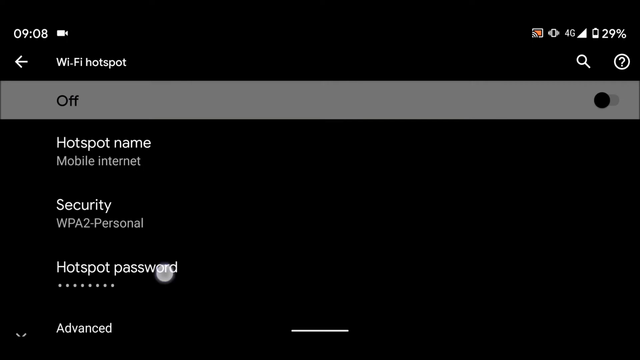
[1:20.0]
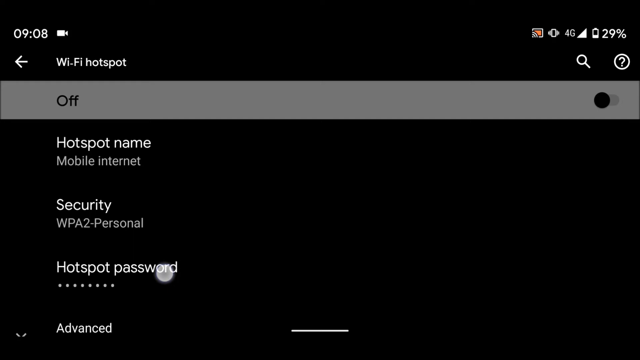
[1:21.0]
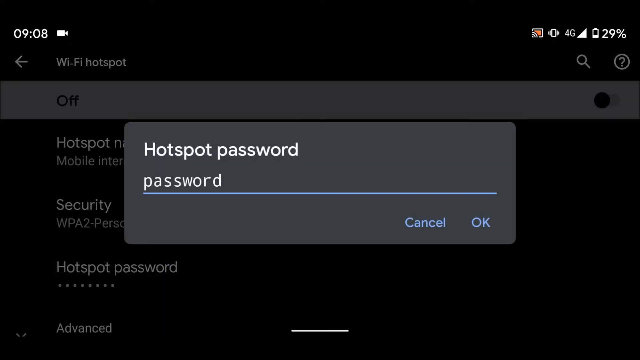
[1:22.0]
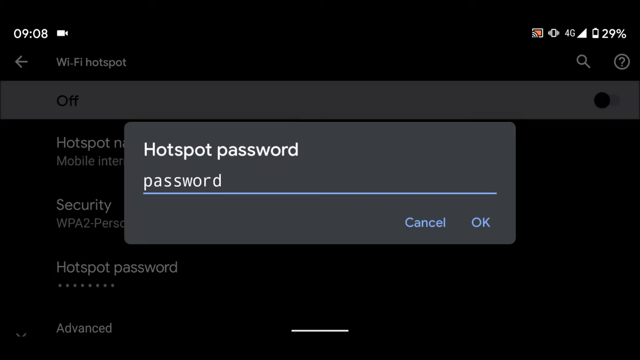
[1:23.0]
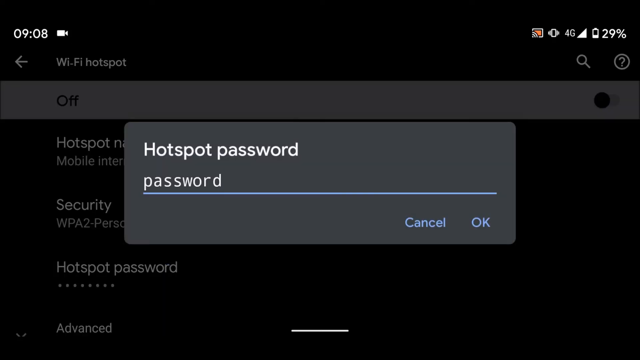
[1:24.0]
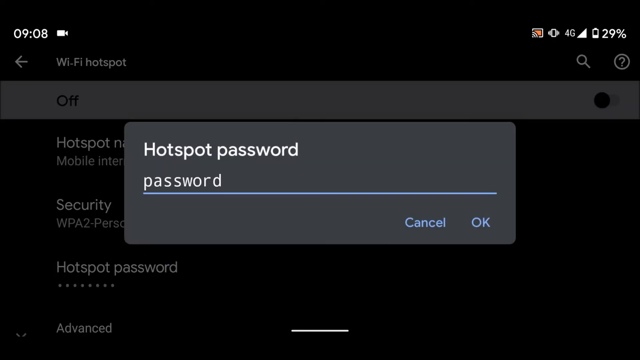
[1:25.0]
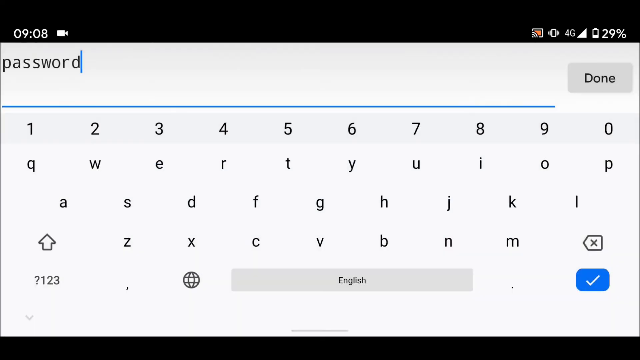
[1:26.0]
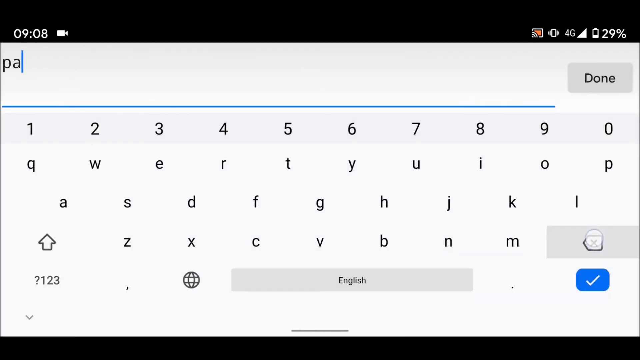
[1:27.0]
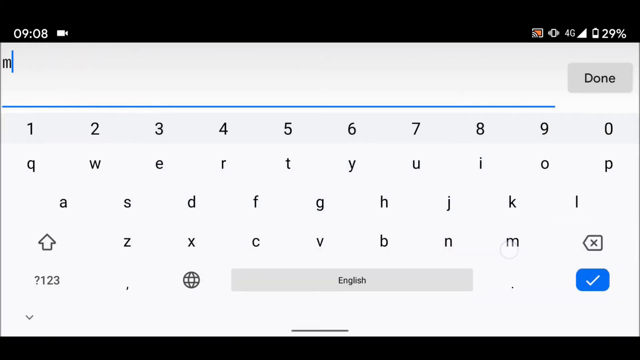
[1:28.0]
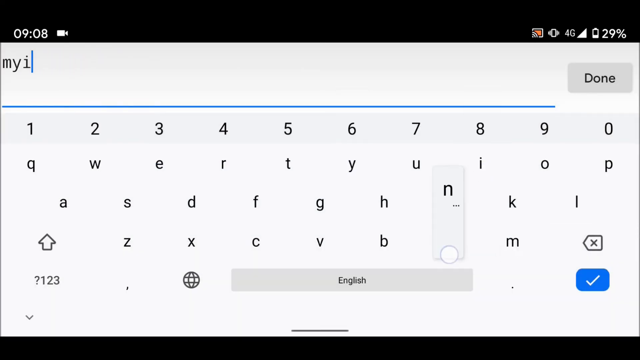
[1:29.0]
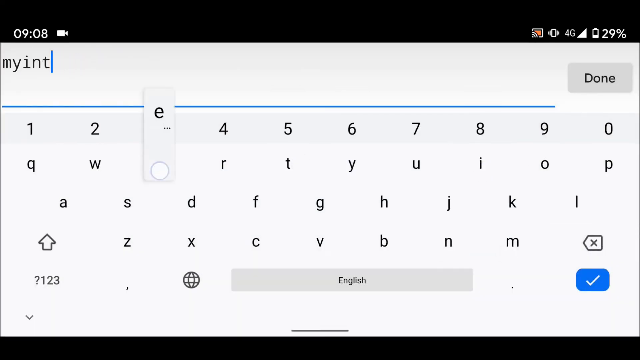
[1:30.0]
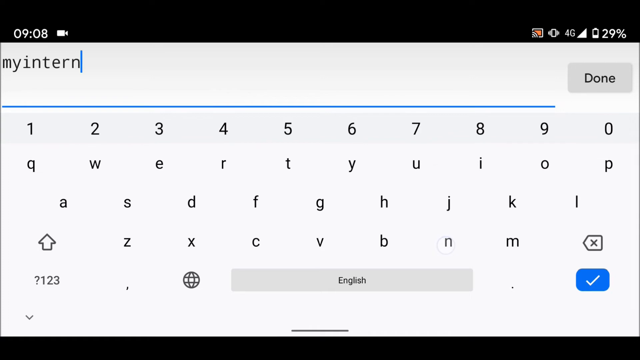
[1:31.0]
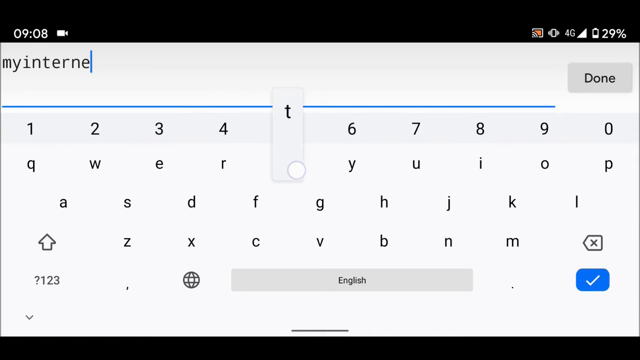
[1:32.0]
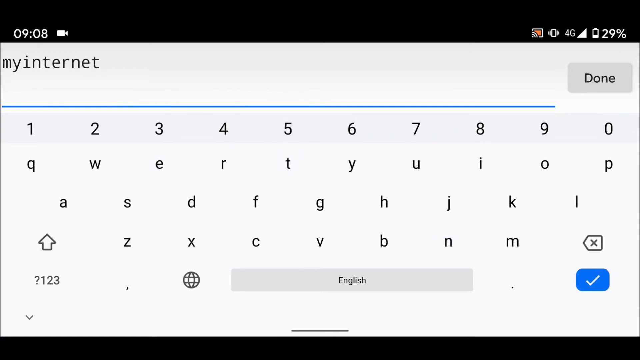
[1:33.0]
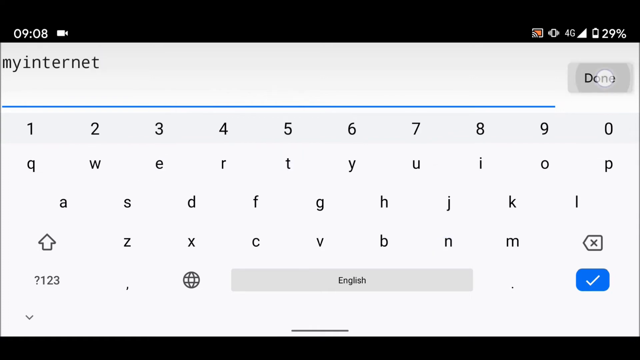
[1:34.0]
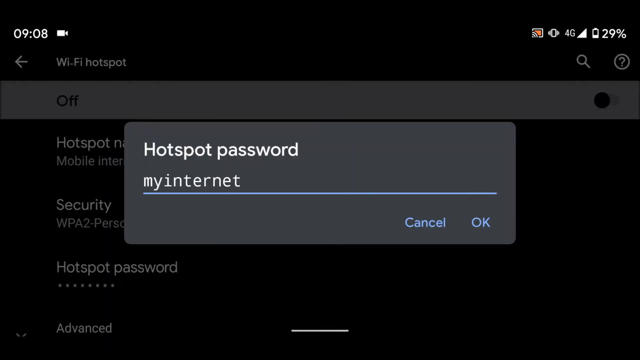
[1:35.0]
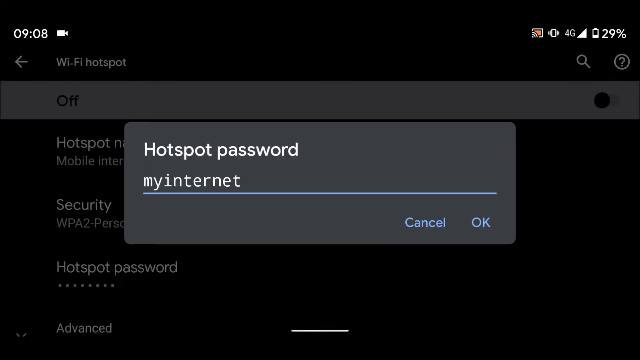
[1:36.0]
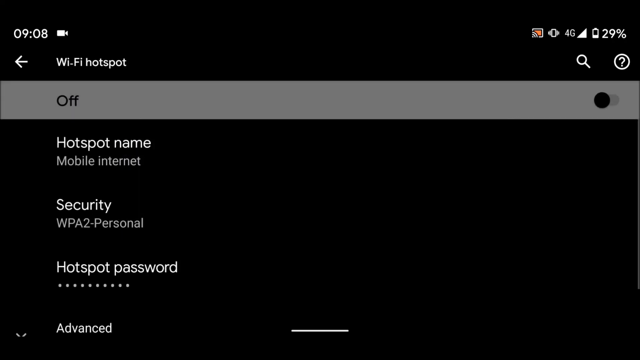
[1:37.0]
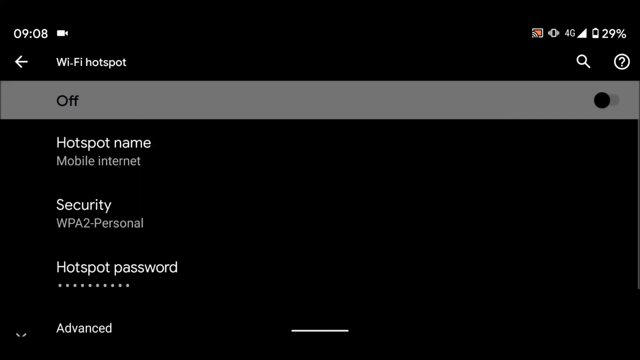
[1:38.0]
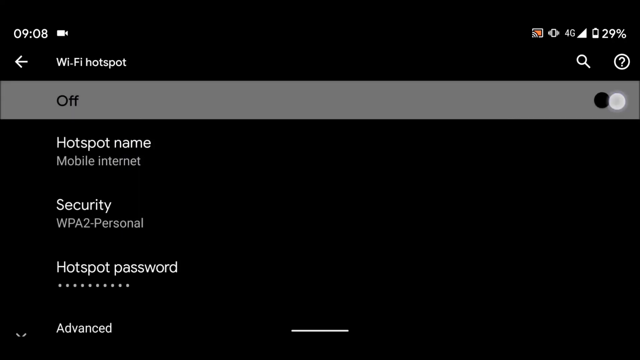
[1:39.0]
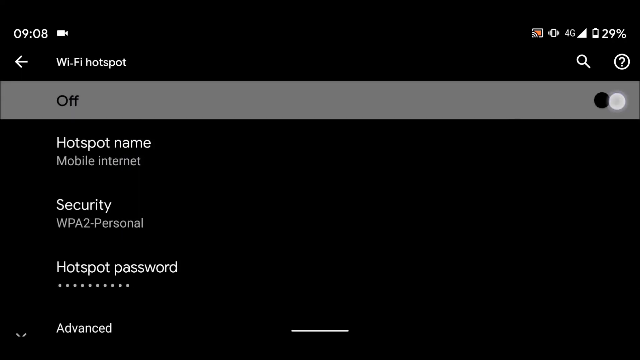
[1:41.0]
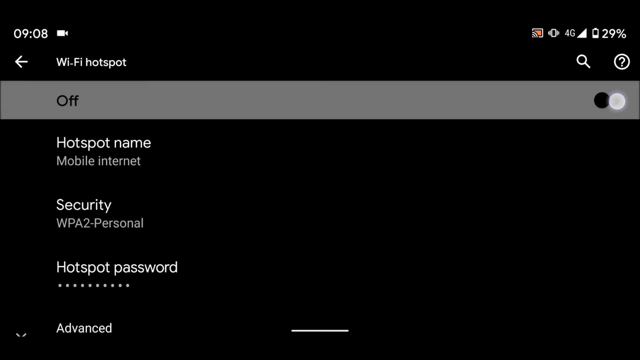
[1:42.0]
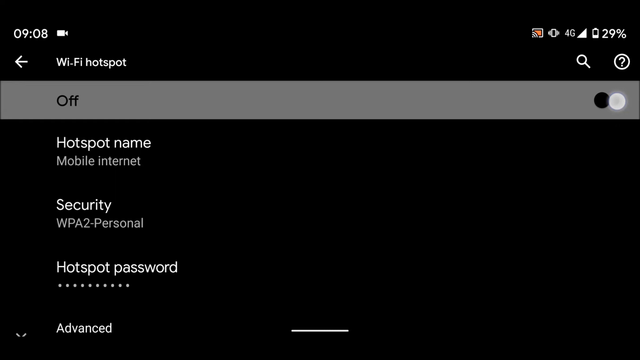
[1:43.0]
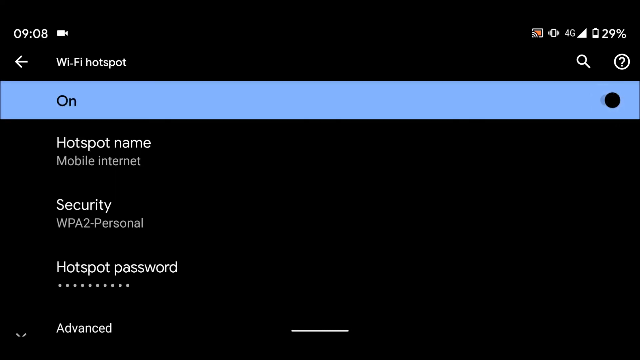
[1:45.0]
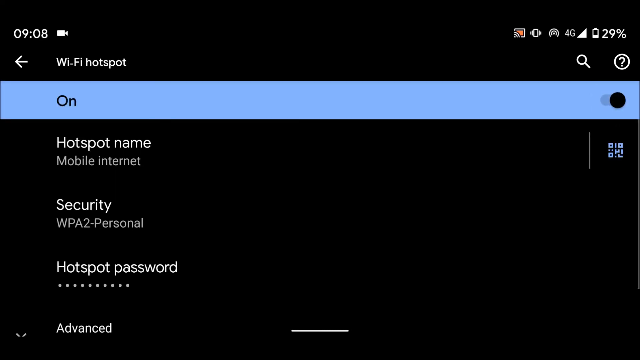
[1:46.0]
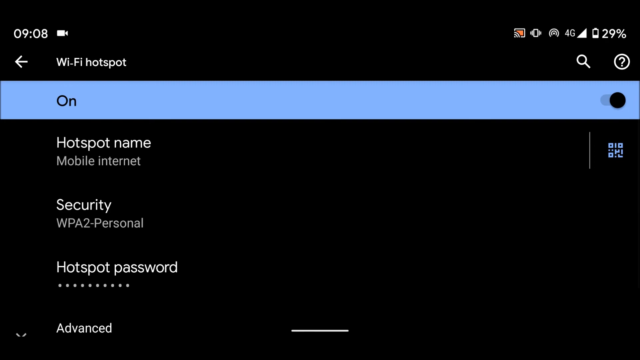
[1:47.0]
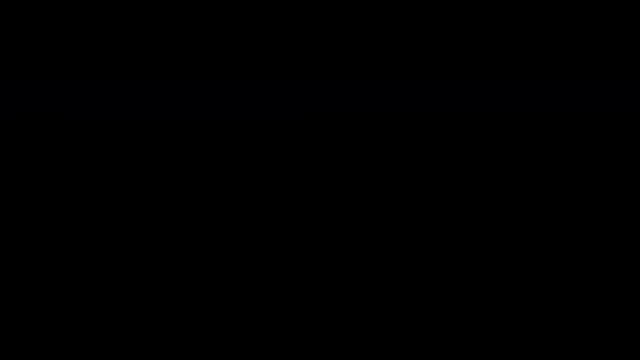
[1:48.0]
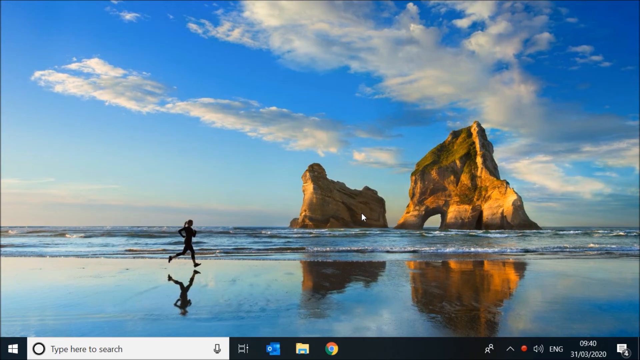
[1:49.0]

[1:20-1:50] A menu, apparently on a cell phone, reads "Wi-Fi hotspot" with more options below. A box appears in the forefront titled "hotspot password"; underneath it reads "password", with a blinking blue cursor and a blue horizontal line below. At the bottom of the box, "cancel" appears in blue on the left and "okay" to its right. The person seems to click on the password field, a keyboard appears, and they erase the password and type a new one with no spacing. The keyboard disappears, and "myinternet" now appears under "hotspot password". They click OK, and the screen returns to the "Wi-Fi hotspot" screen.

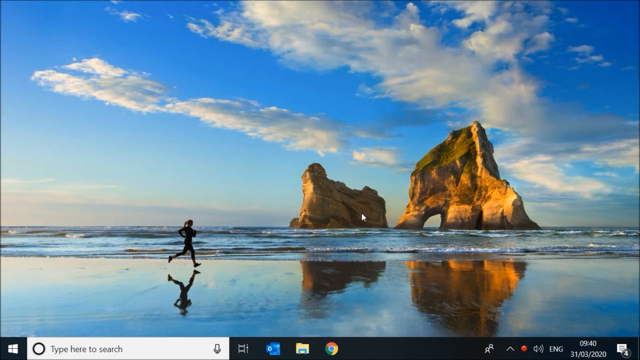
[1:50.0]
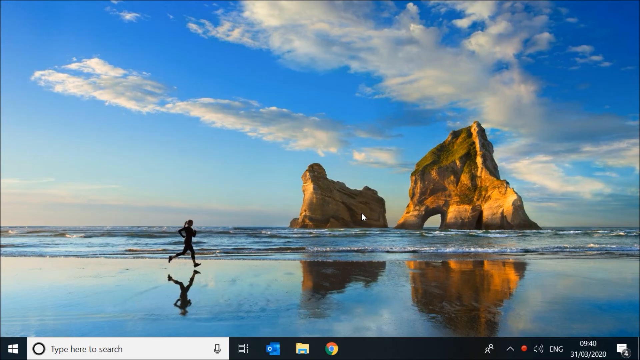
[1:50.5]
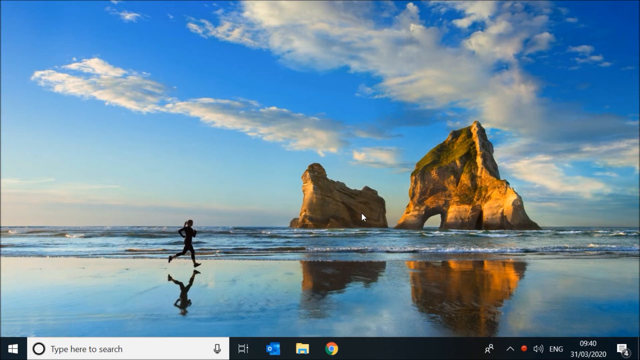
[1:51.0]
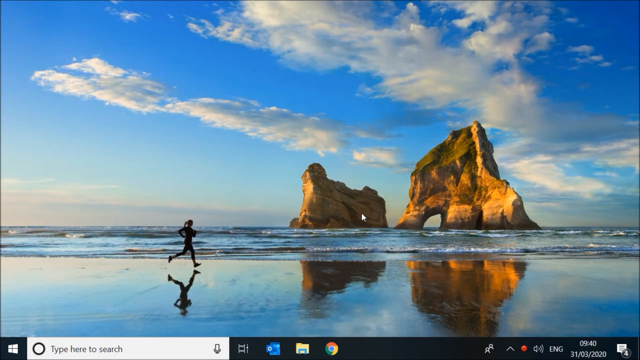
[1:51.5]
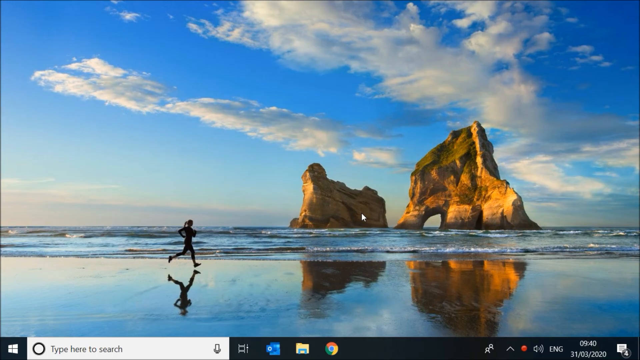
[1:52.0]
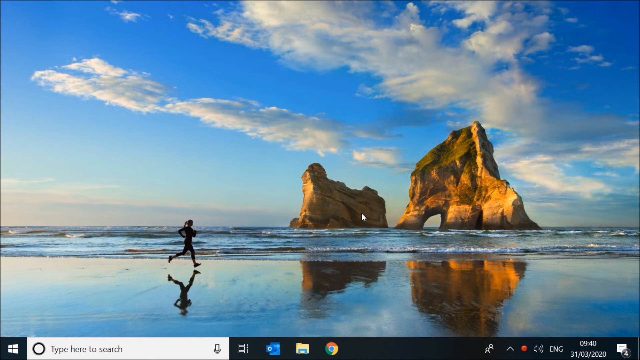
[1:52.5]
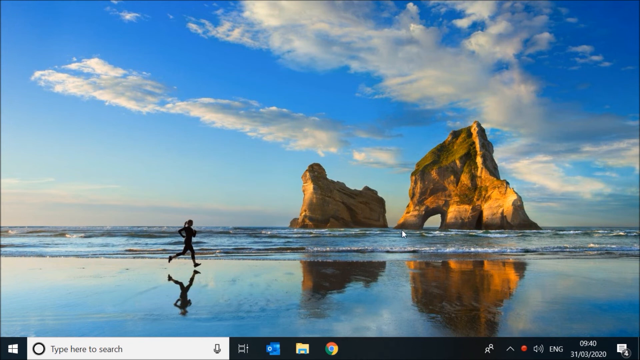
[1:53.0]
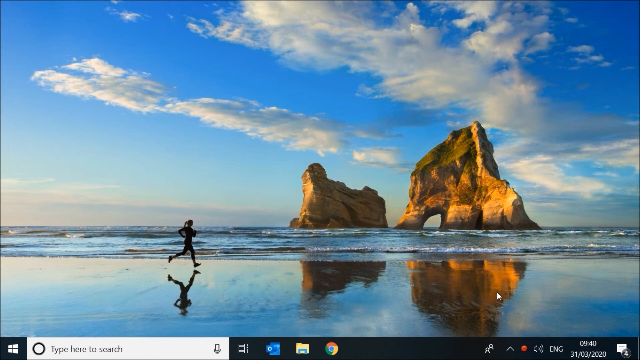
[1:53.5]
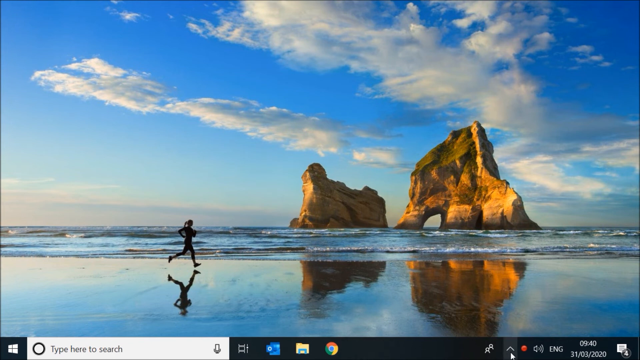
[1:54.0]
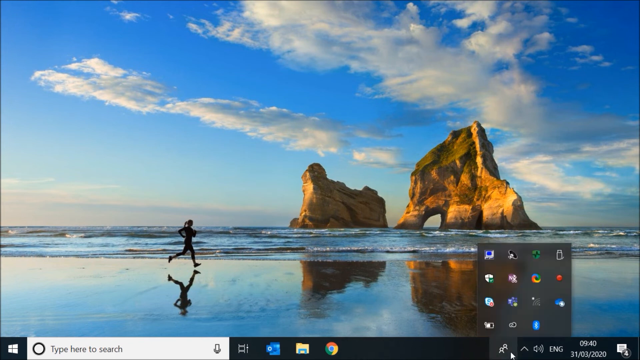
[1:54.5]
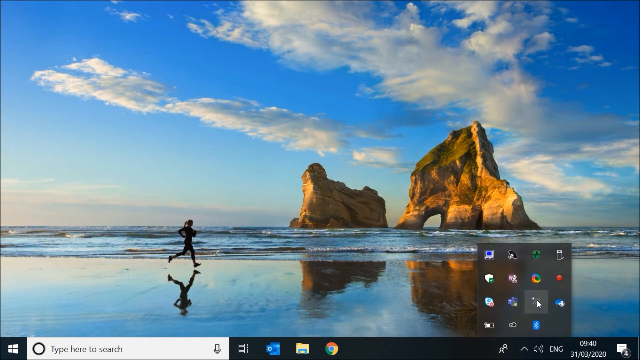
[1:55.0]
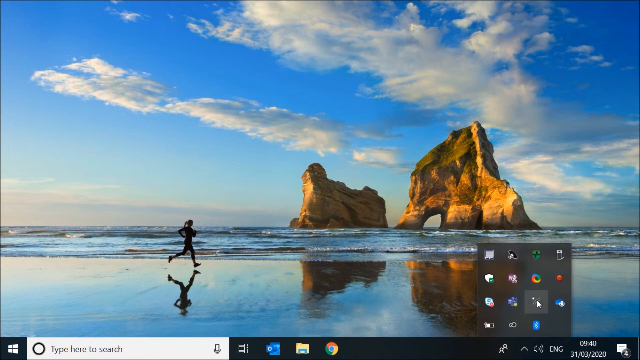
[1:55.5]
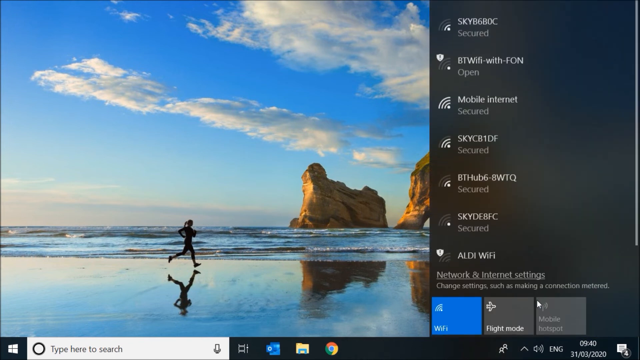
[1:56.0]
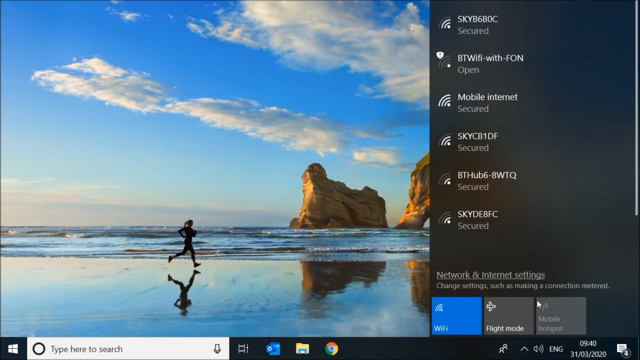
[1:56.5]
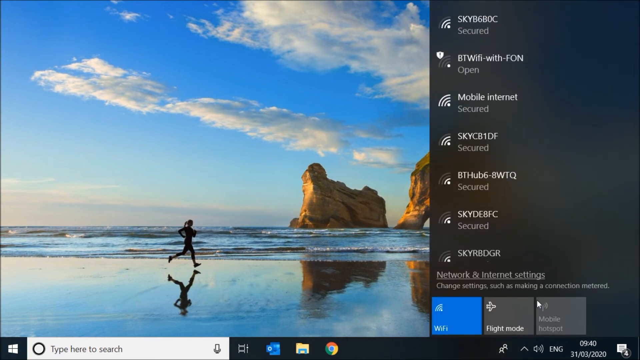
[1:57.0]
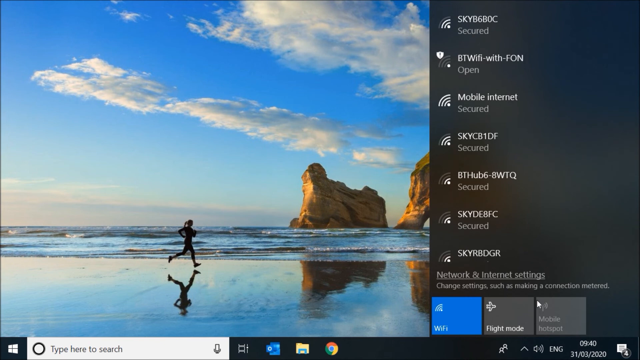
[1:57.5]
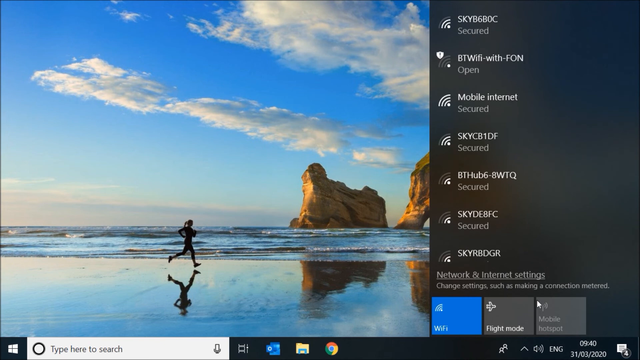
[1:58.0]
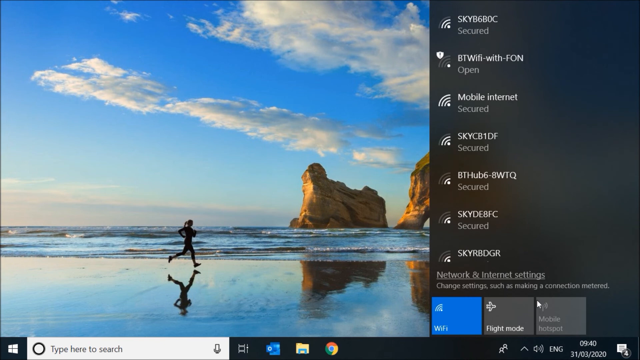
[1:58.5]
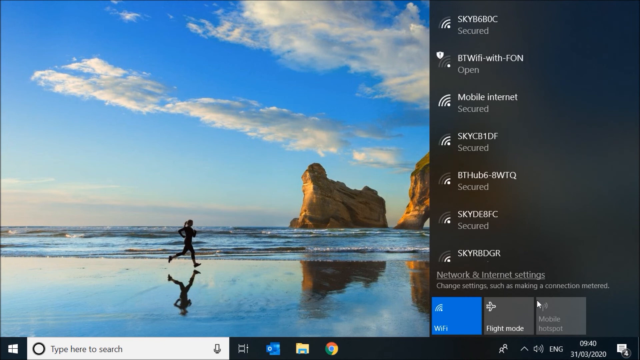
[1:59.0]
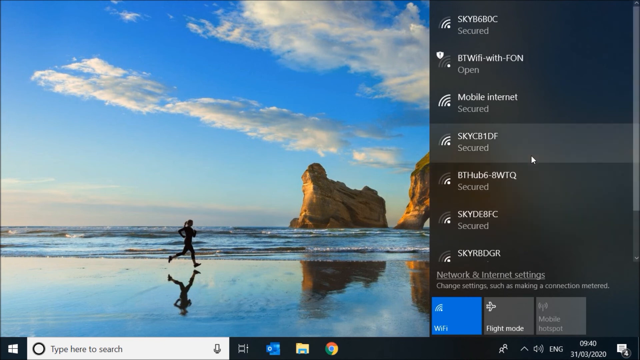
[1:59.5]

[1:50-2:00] What appears to be a picture of a person running on a beach is shown, with an eroded cliff in the background in the middle of what seems to be water, and an arc through one of the rocks. This seems to be the wallpaper on the person's computer screen. A menu with a black background and white text appears on the right side. They appear to be looking for a Wi-Fi connection; they hover over one of the Wi-Fi names, click on it, and the view navigates to another window.